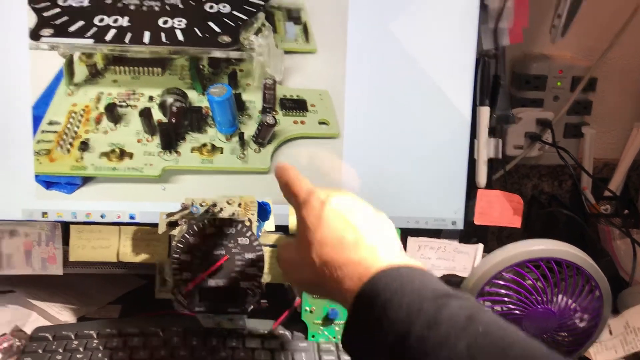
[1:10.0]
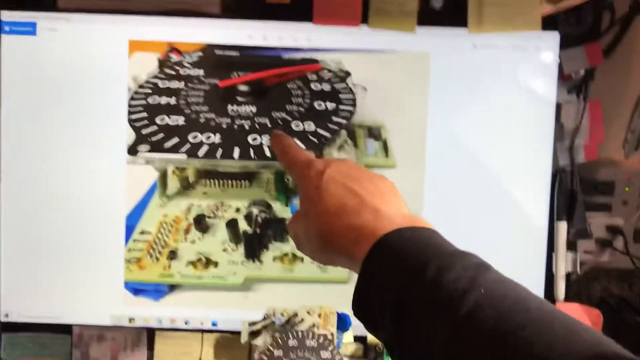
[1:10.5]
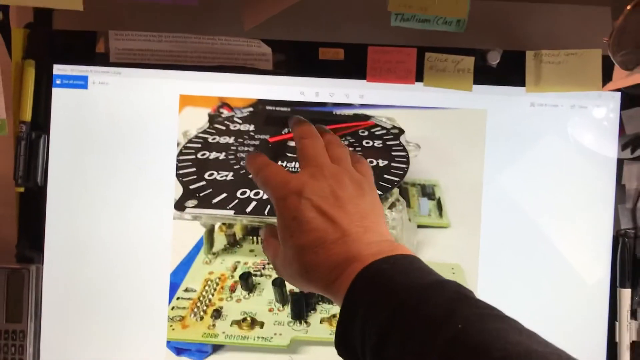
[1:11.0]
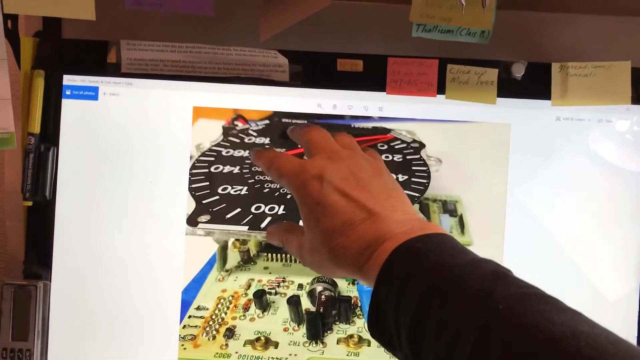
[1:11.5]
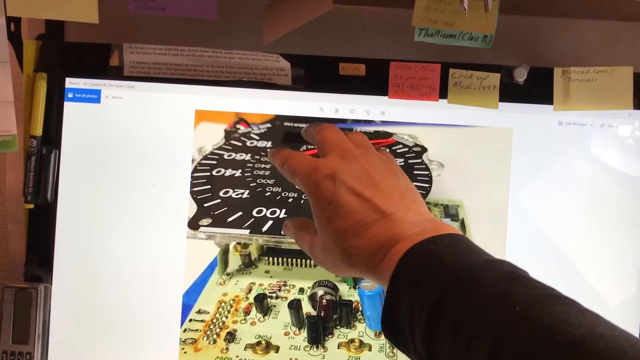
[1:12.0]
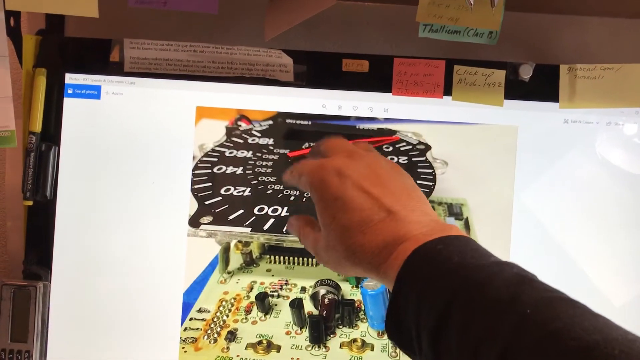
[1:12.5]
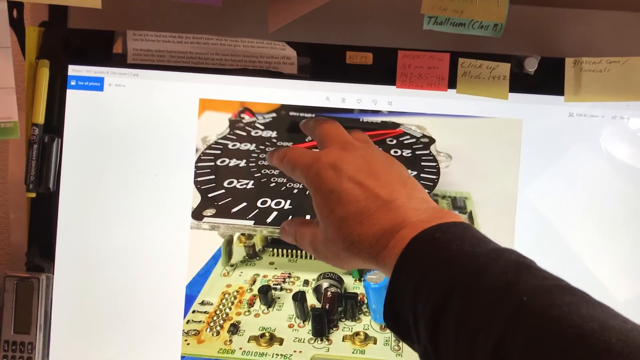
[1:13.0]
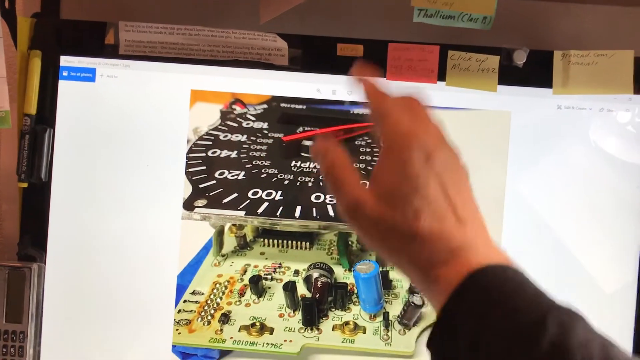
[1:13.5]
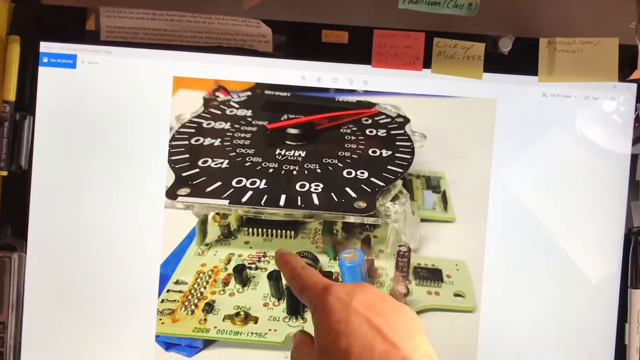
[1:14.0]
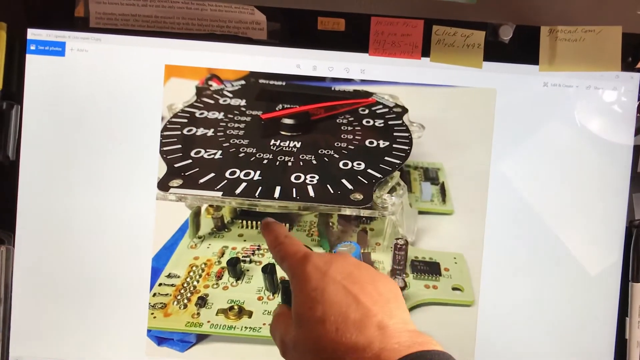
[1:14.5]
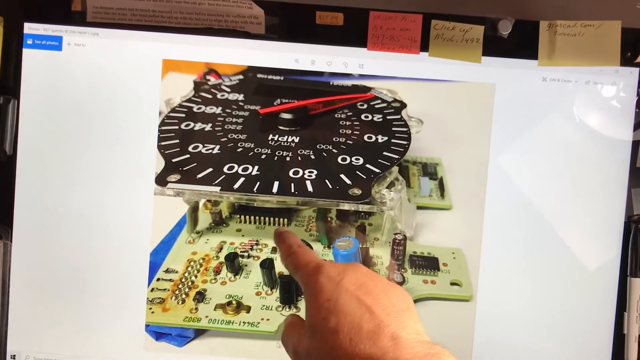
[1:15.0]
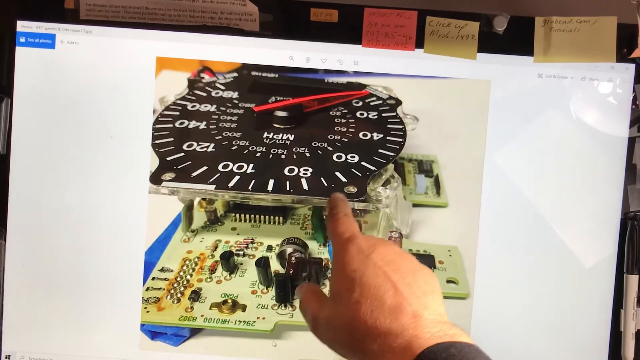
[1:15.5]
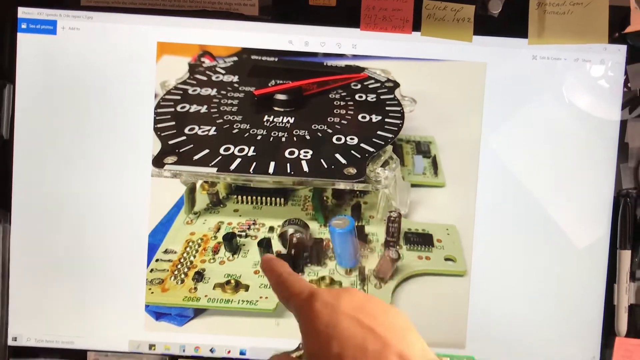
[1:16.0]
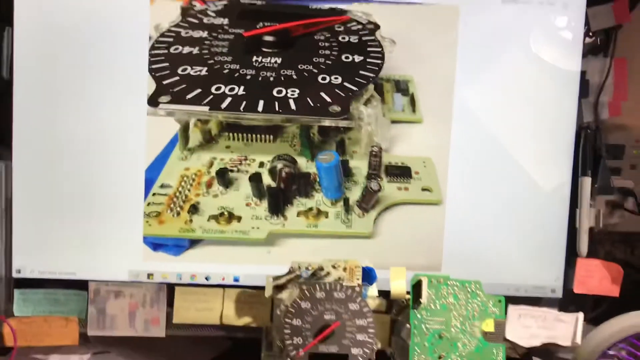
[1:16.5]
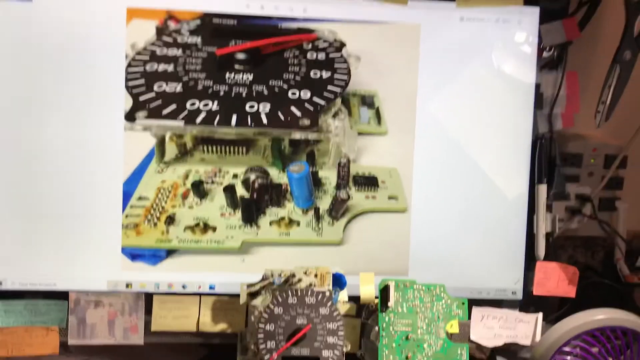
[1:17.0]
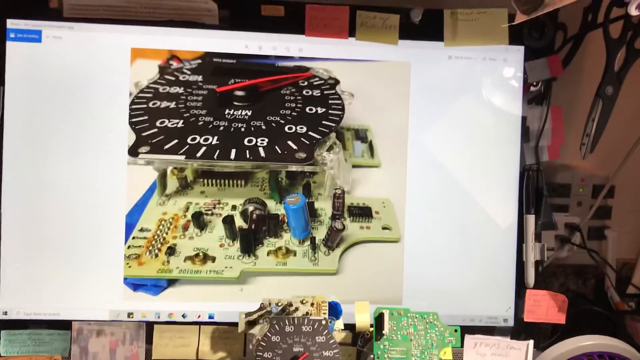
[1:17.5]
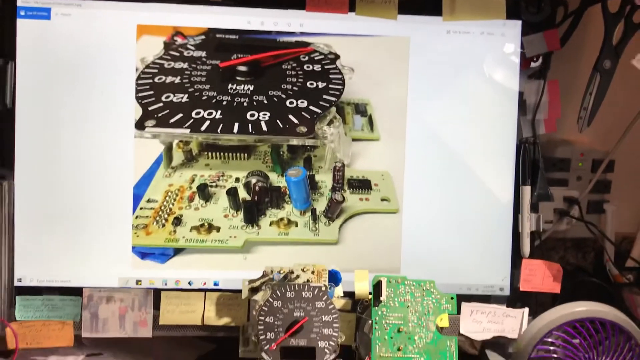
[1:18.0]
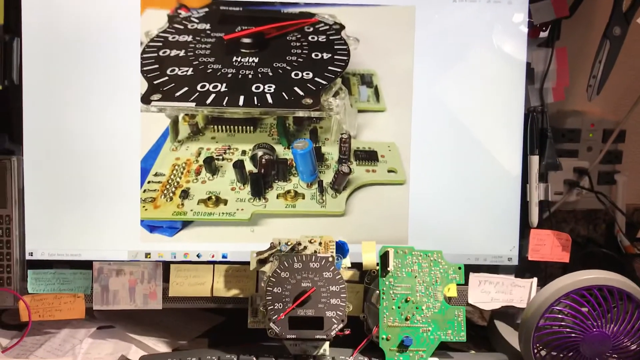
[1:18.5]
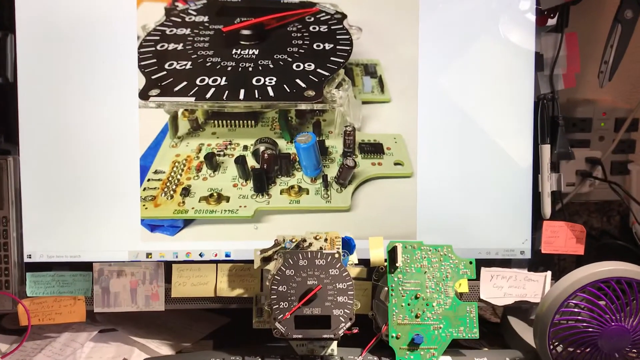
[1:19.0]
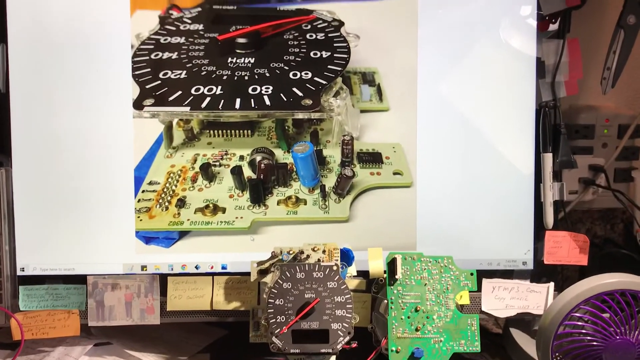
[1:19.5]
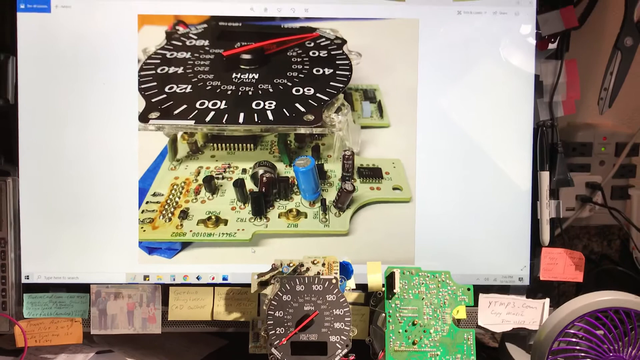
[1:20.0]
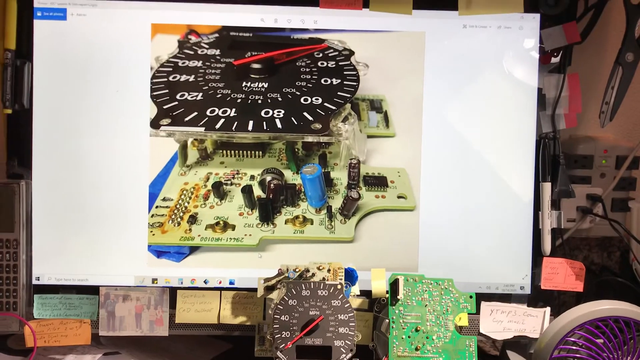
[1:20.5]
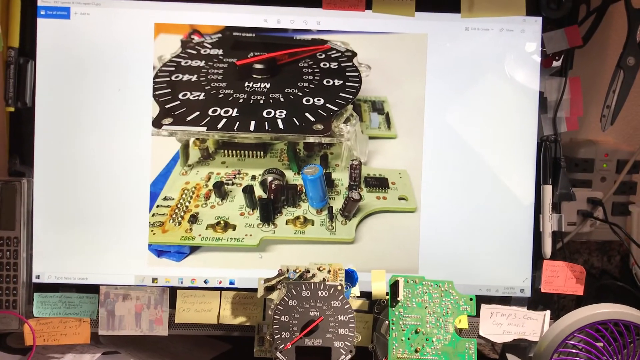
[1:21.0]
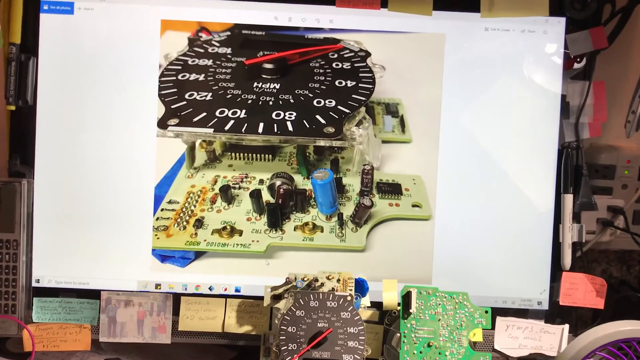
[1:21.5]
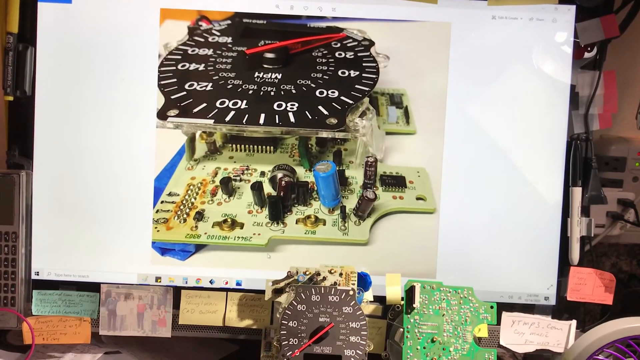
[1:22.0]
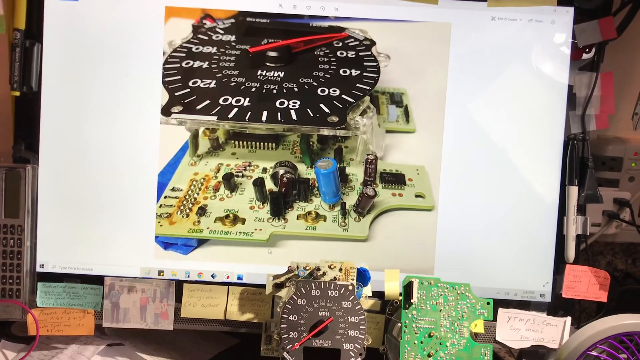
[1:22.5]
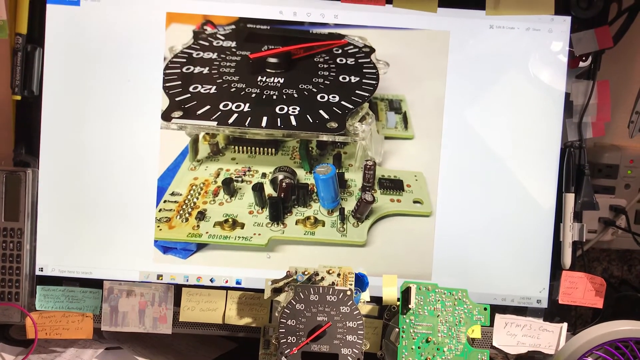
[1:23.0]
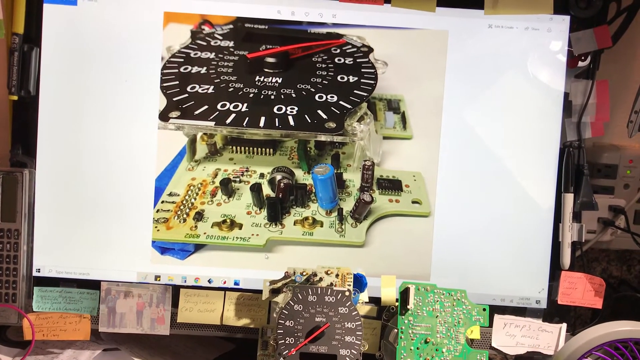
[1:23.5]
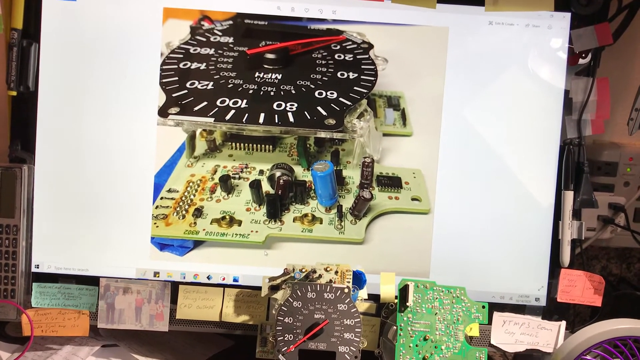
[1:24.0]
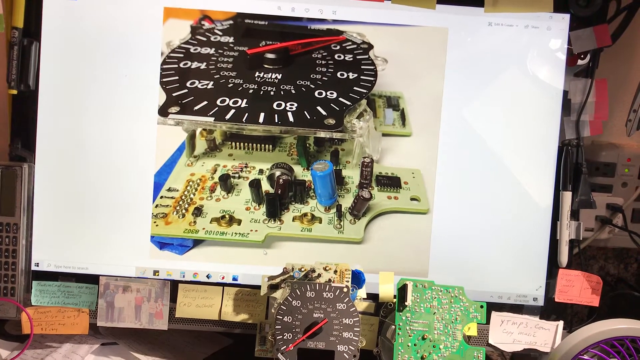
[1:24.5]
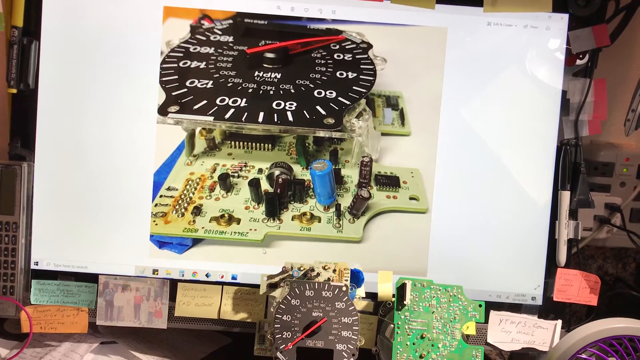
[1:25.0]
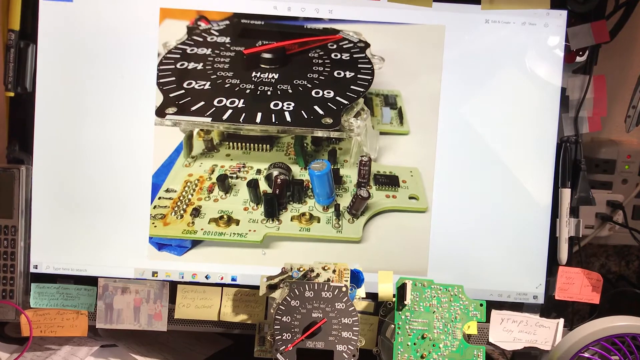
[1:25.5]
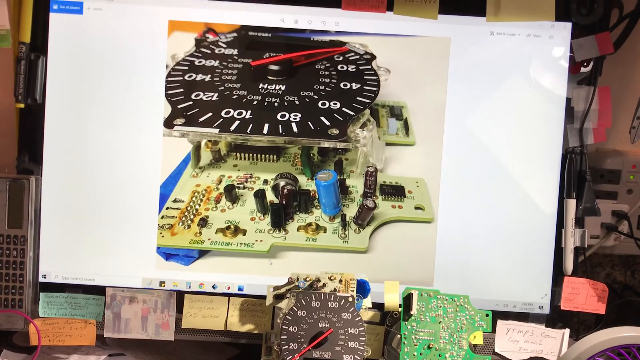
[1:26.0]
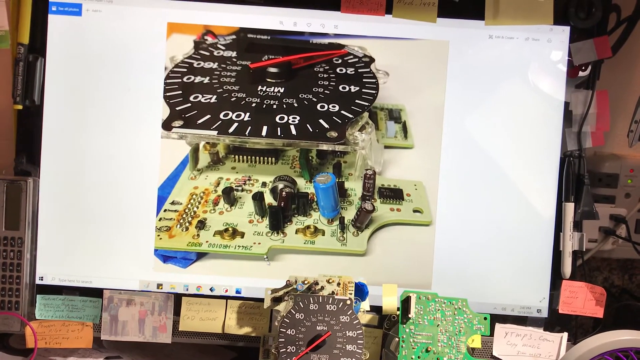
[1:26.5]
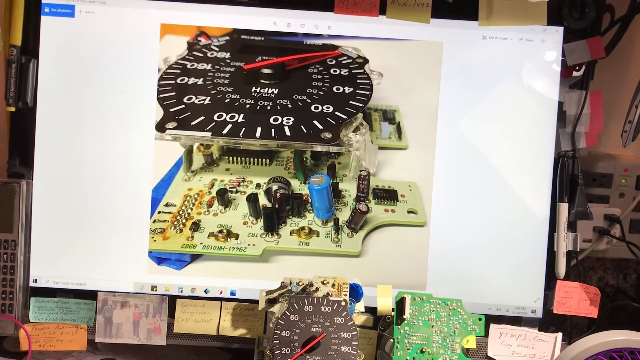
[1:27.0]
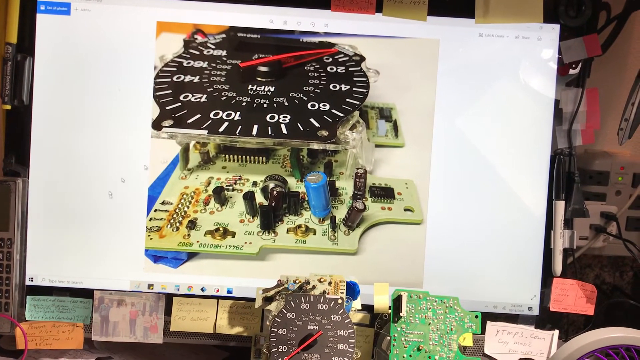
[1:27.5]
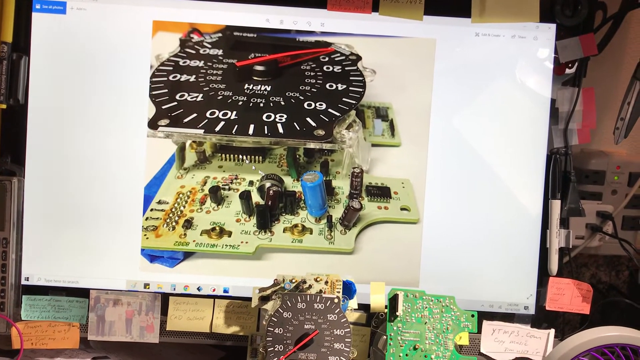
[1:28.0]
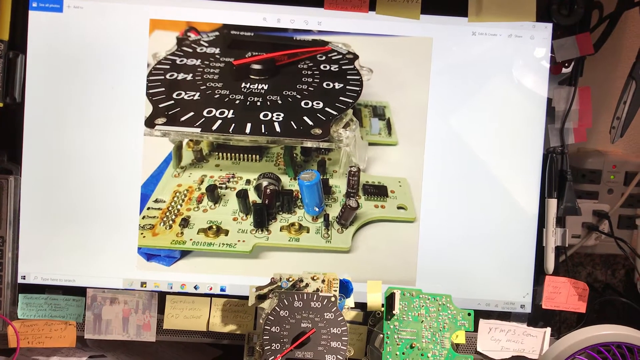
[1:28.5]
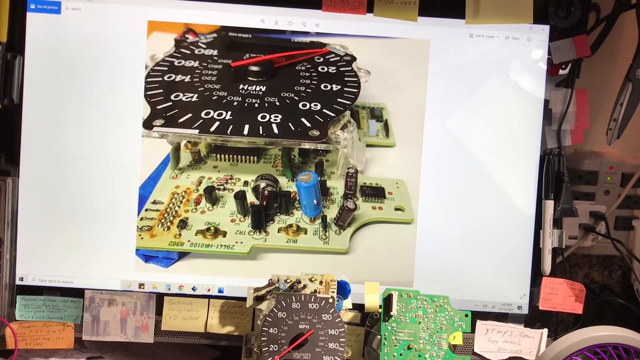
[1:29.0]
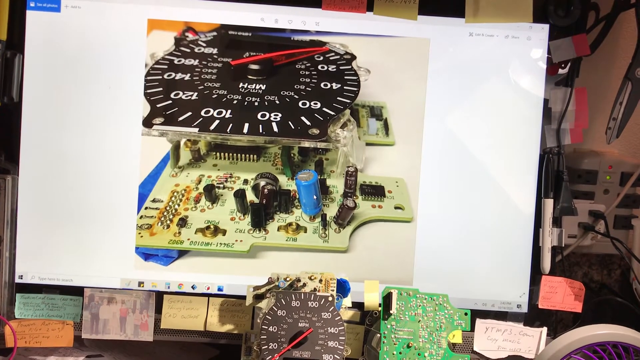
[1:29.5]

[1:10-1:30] The shot opens on a real close-up of the speedometer on the display, then eventually pans out to show the monitors and the two speedometers leaning up against the monitor. Post-it notes are all over the monitor, and the top of the fan is visible. What looks like a permanent marker hangs off the monitor. The hand appears much larger; it is on the face of the speedometer at first, then goes down to where the CPU is and points around there.